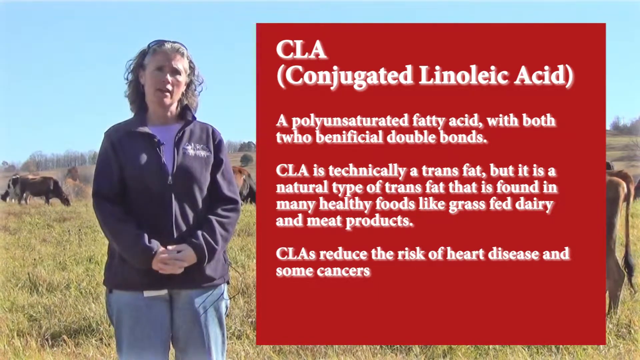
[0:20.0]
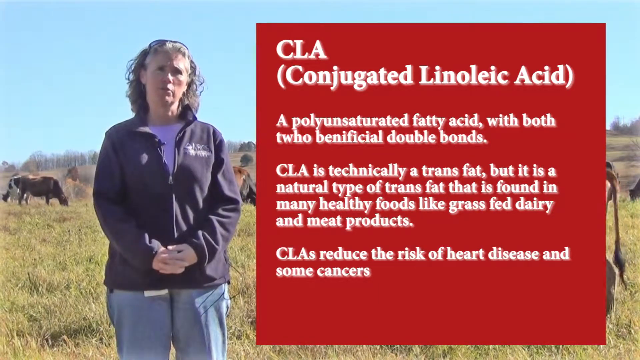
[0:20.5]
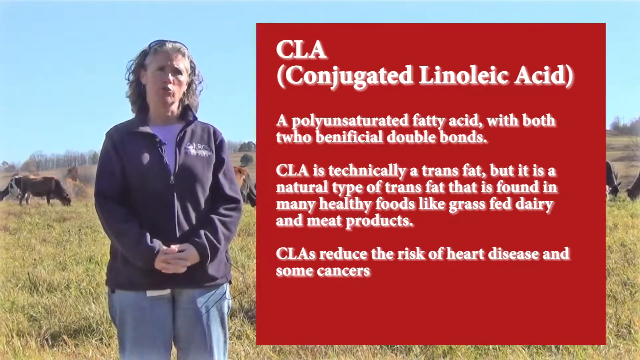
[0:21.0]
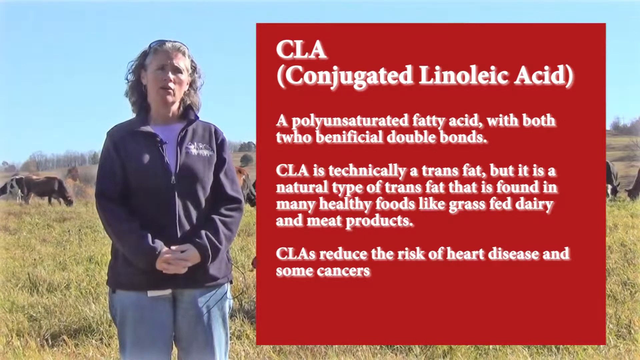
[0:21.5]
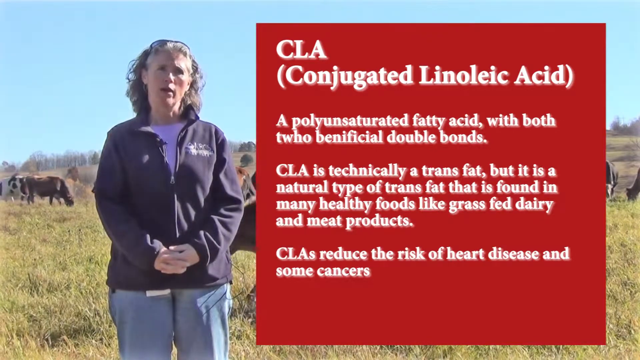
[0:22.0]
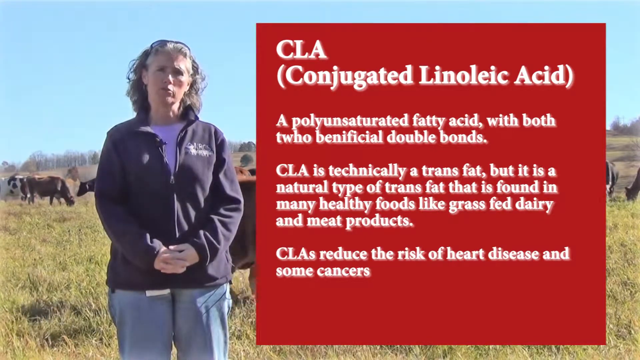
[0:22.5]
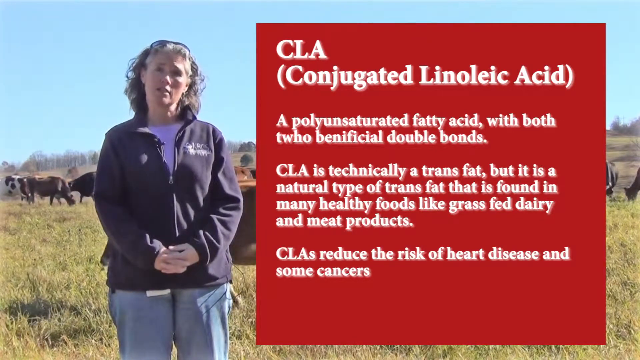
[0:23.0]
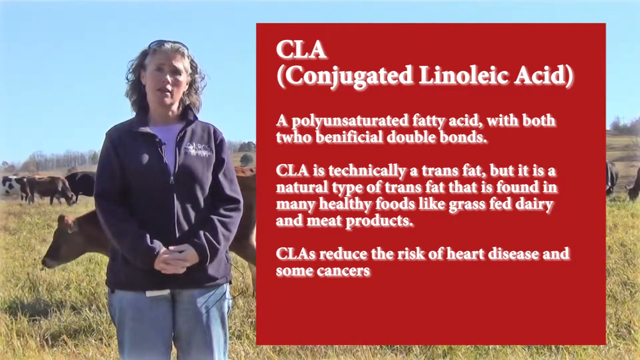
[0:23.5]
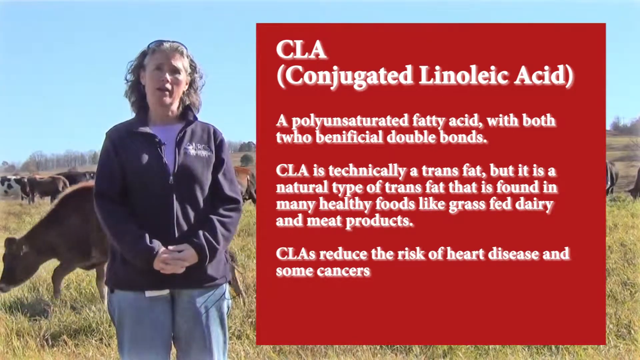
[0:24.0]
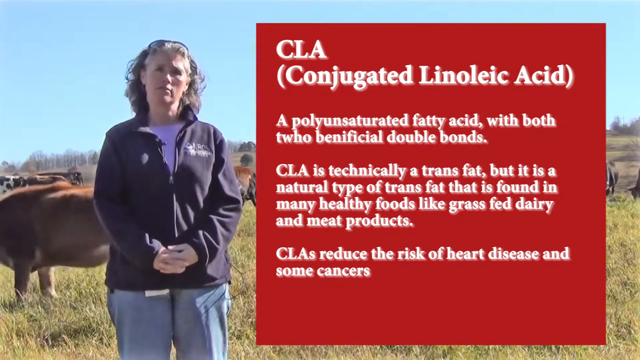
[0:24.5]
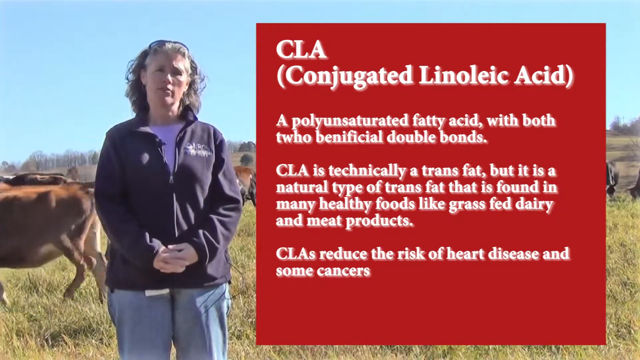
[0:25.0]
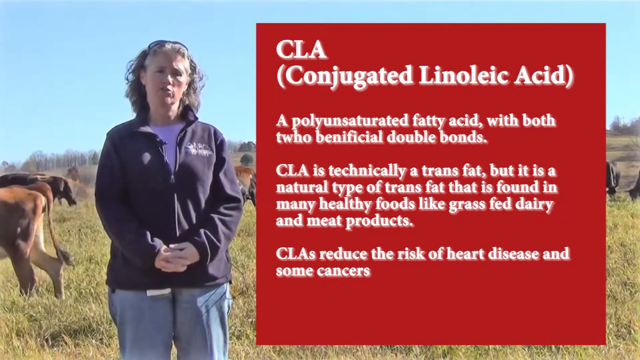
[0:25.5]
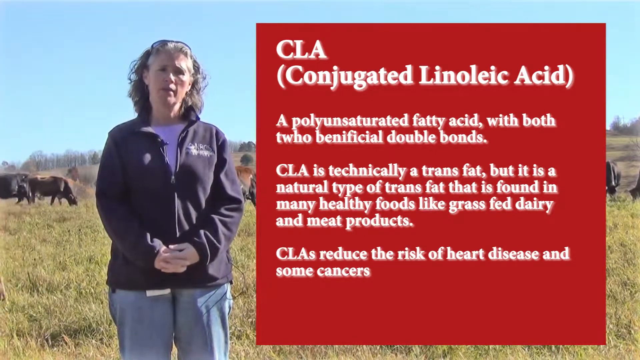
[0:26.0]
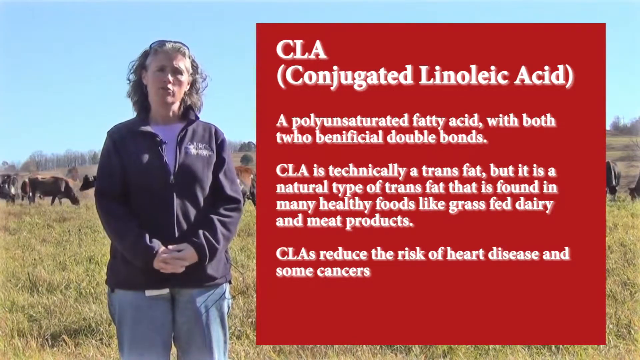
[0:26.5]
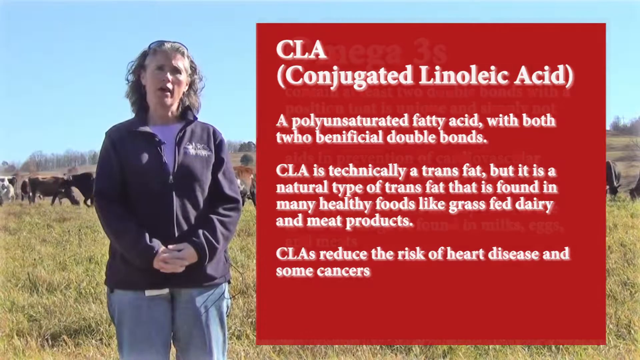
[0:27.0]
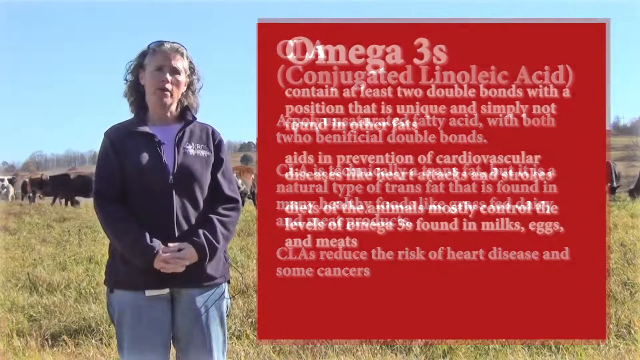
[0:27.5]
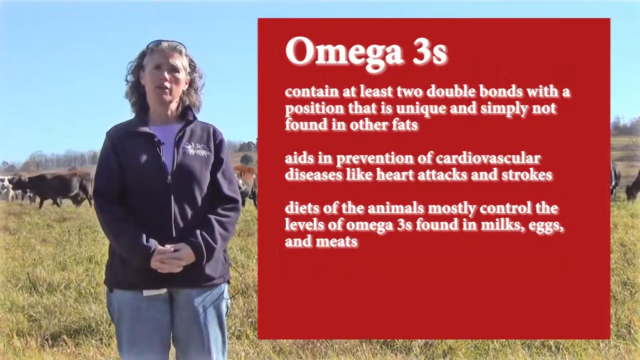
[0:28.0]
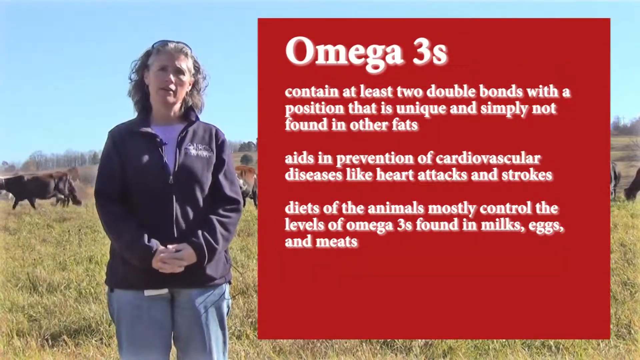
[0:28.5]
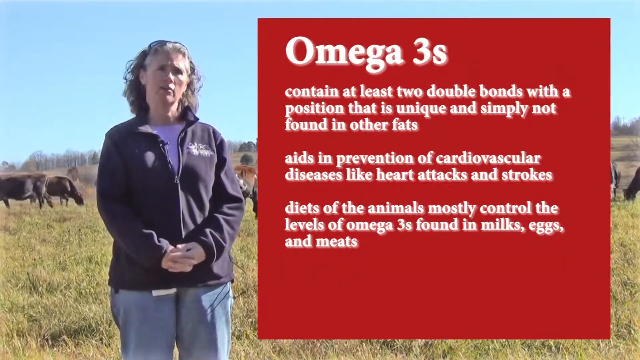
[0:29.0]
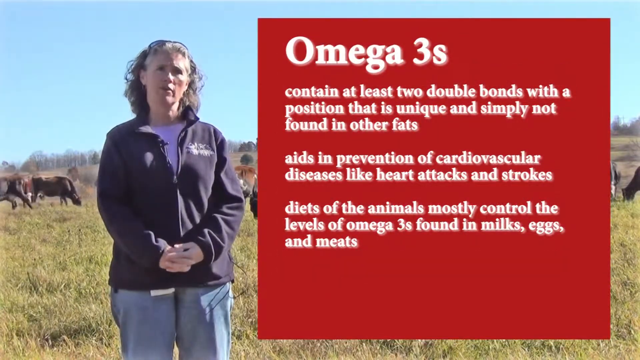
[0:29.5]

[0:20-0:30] The woman in a navy jacket appears with a note beside her about CLA, a polyunsaturated fatty acid with two beneficial double bonds. The note says CLA is technically a trans fat and reduces the risk of heart disease and some cancers. The woman is promoting CLA, conjugated linoleic acid, for its benefit in helping with heart disease and some cancers.